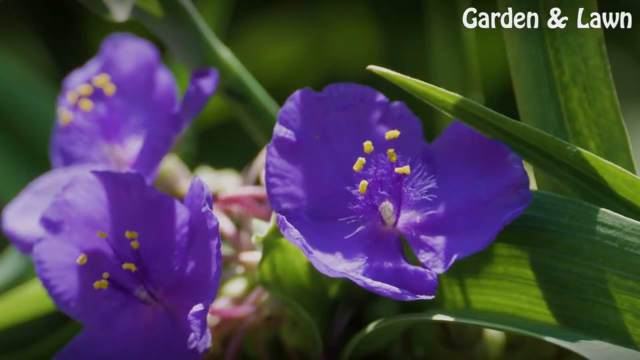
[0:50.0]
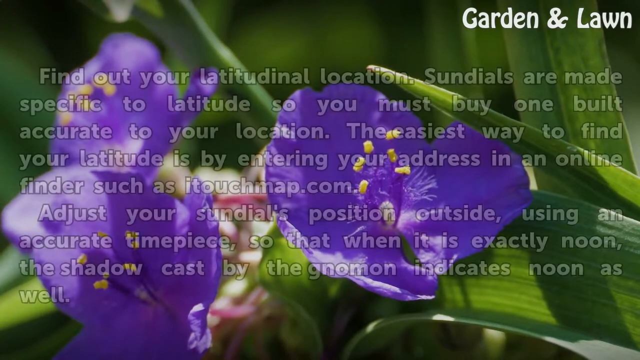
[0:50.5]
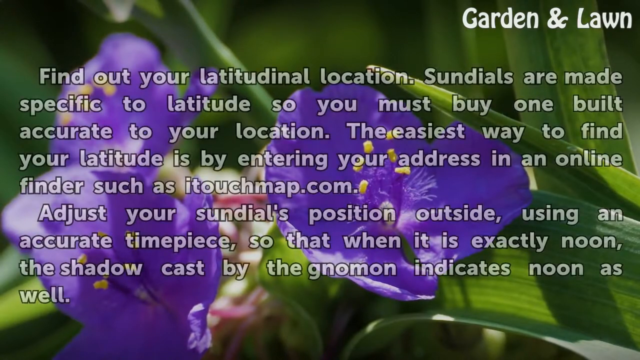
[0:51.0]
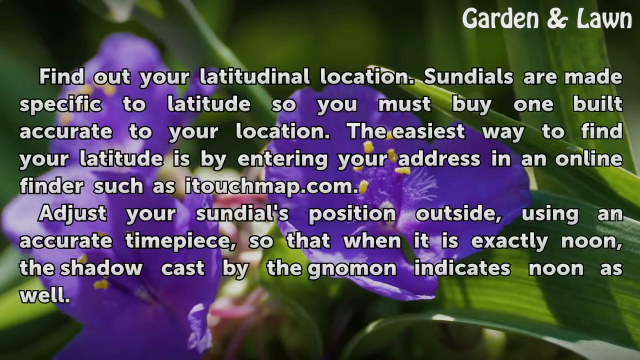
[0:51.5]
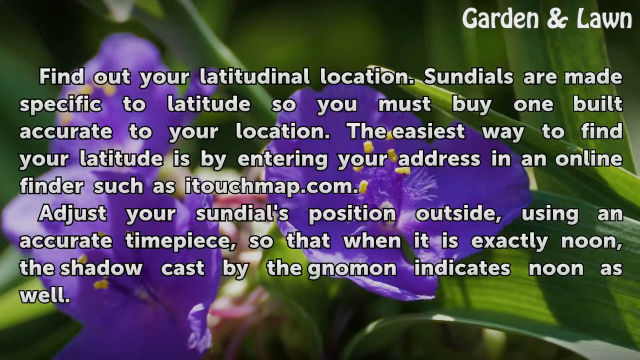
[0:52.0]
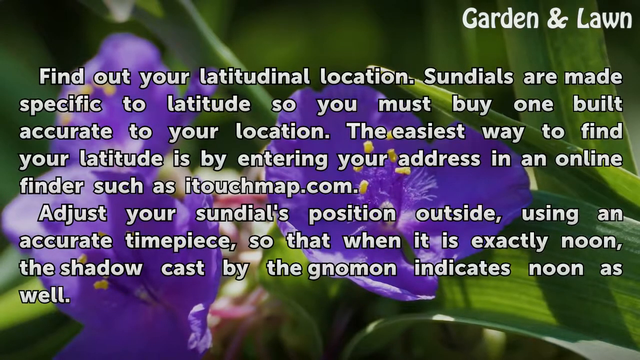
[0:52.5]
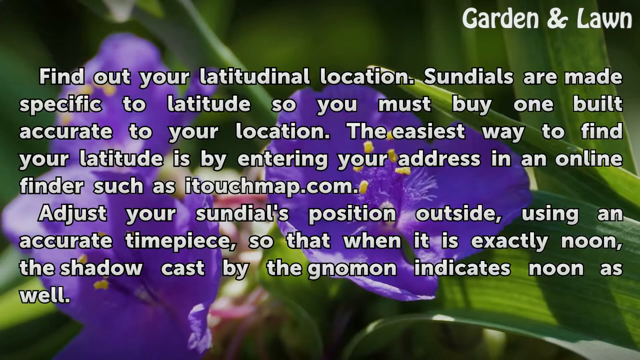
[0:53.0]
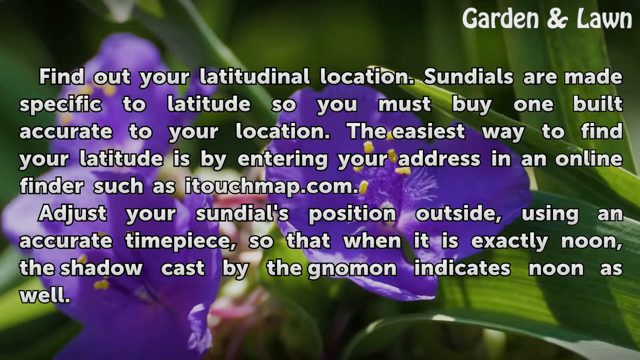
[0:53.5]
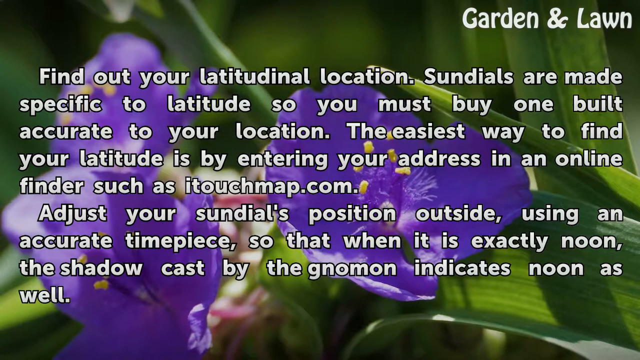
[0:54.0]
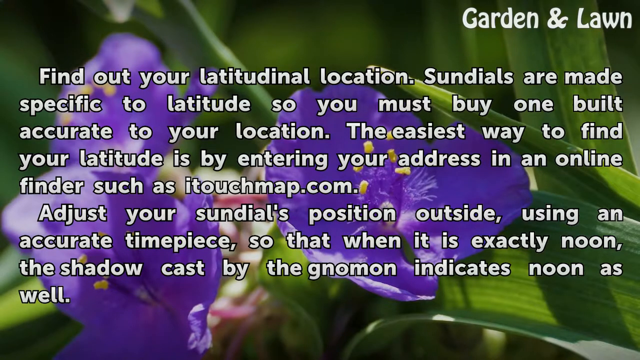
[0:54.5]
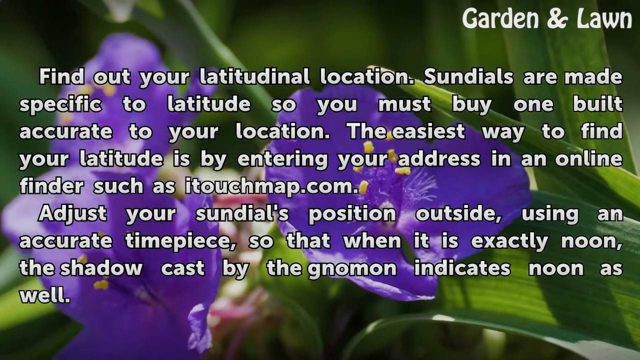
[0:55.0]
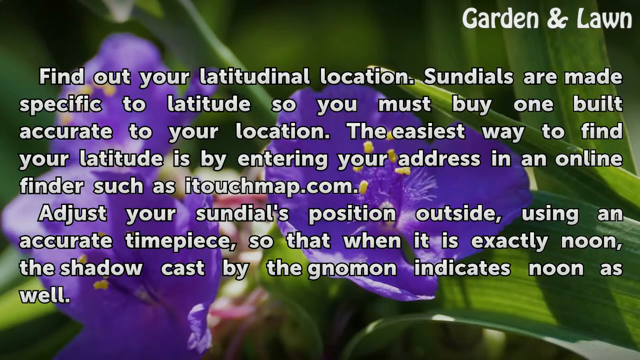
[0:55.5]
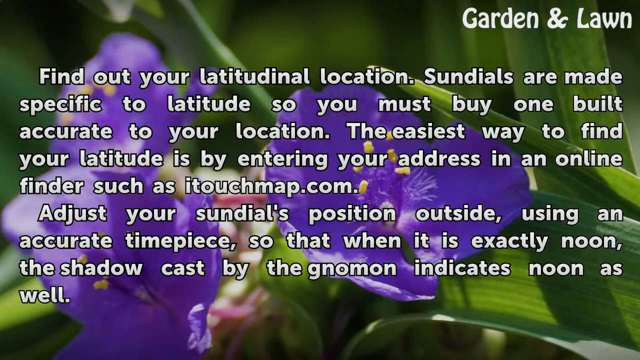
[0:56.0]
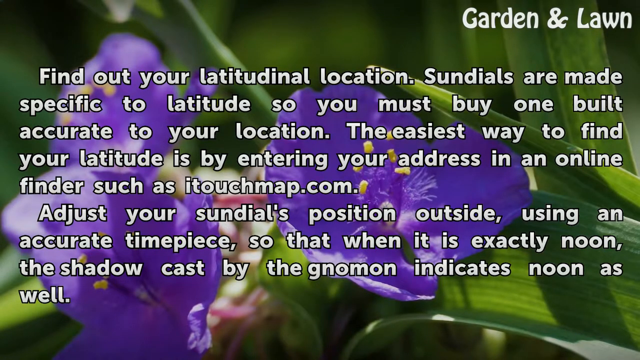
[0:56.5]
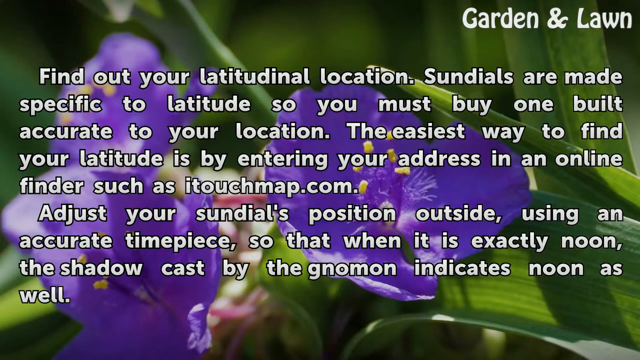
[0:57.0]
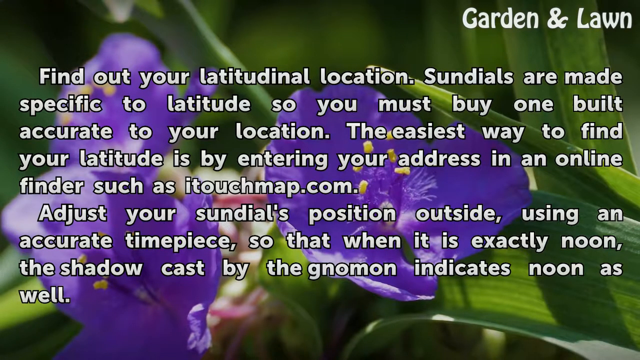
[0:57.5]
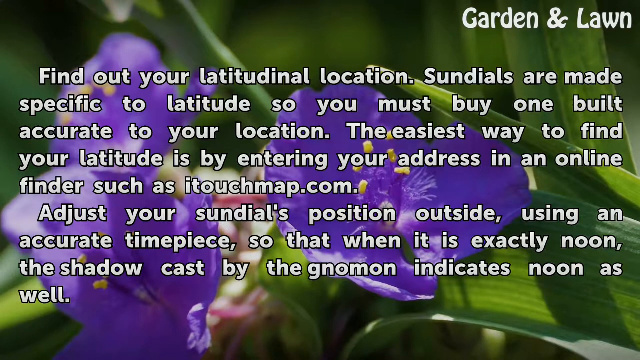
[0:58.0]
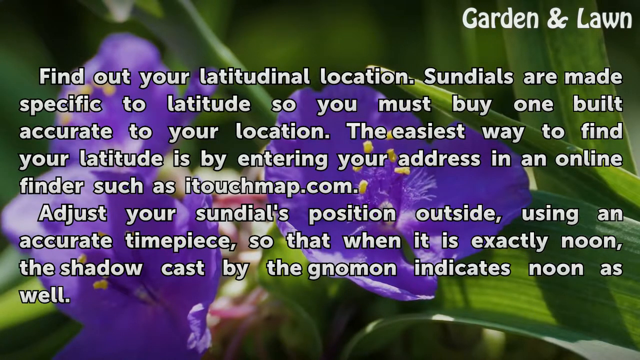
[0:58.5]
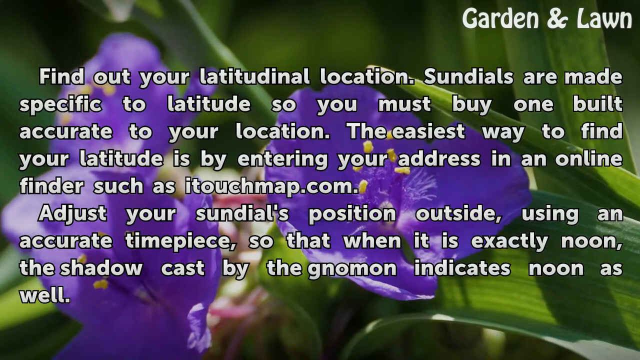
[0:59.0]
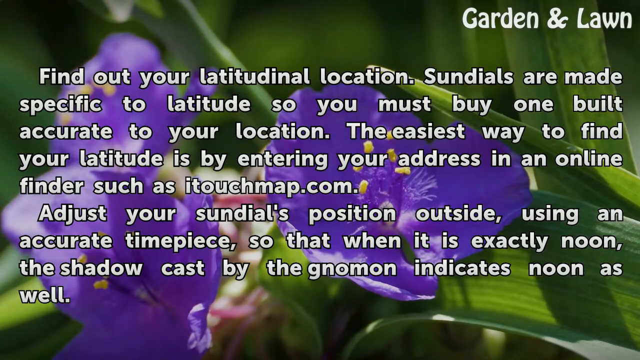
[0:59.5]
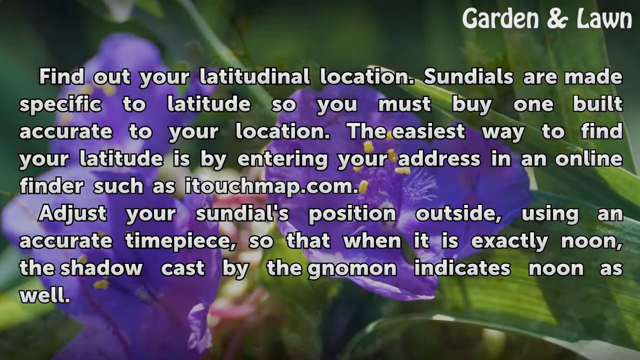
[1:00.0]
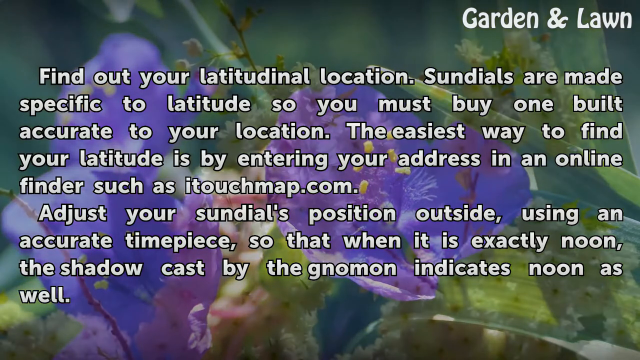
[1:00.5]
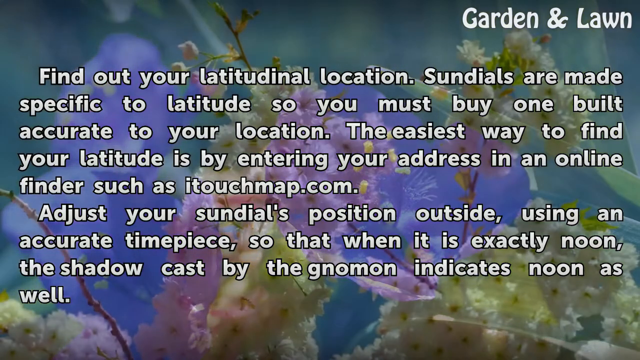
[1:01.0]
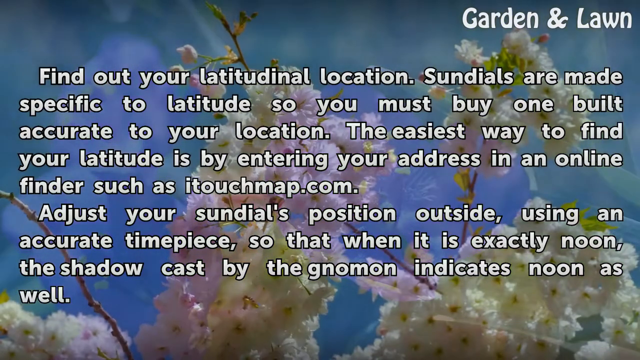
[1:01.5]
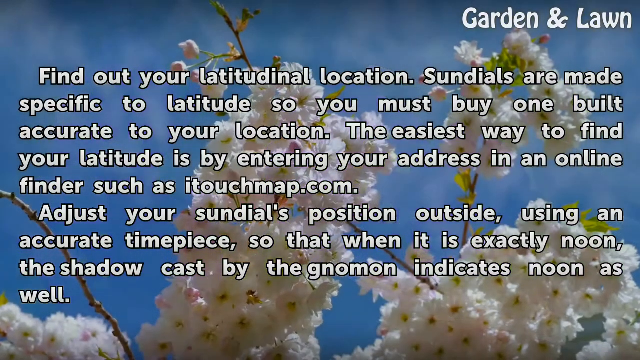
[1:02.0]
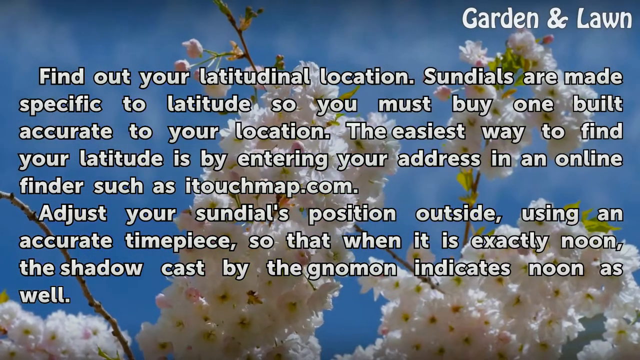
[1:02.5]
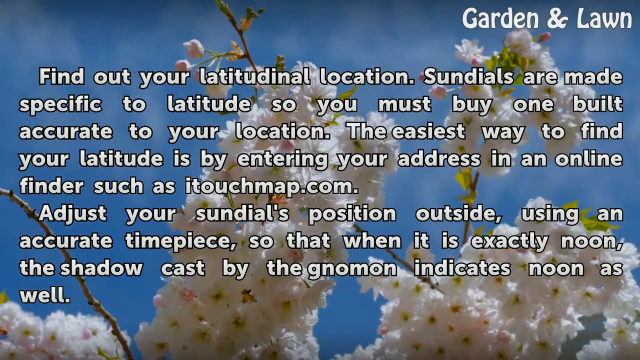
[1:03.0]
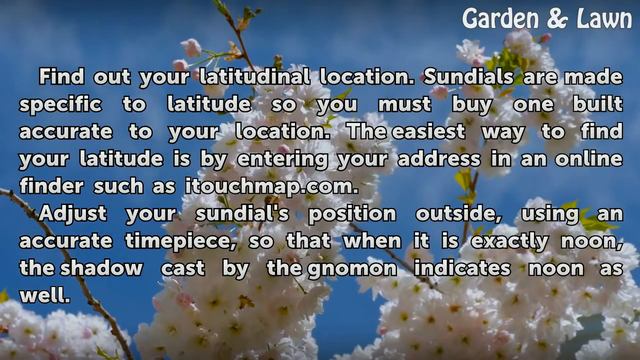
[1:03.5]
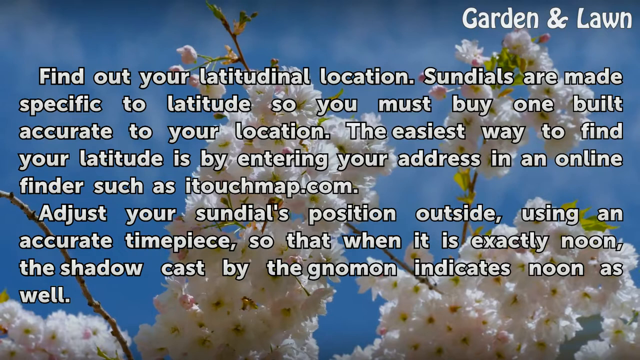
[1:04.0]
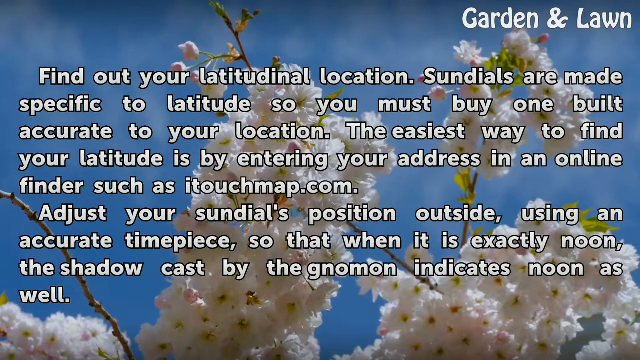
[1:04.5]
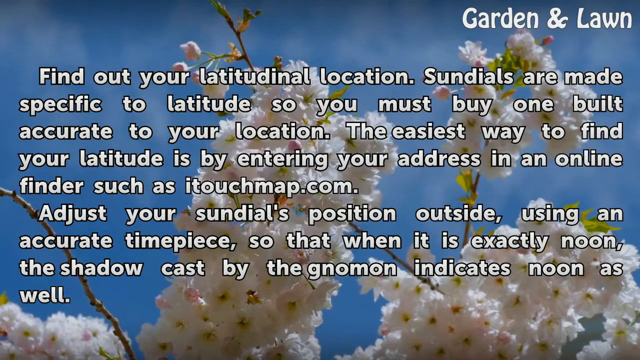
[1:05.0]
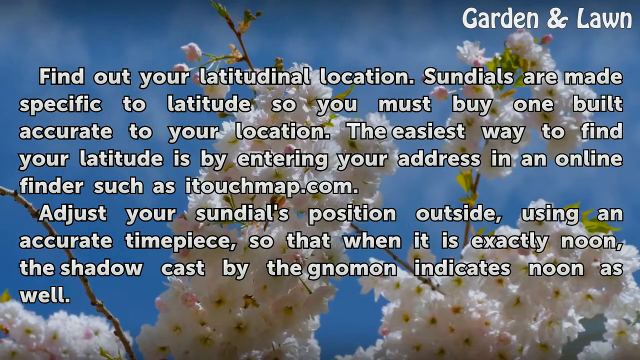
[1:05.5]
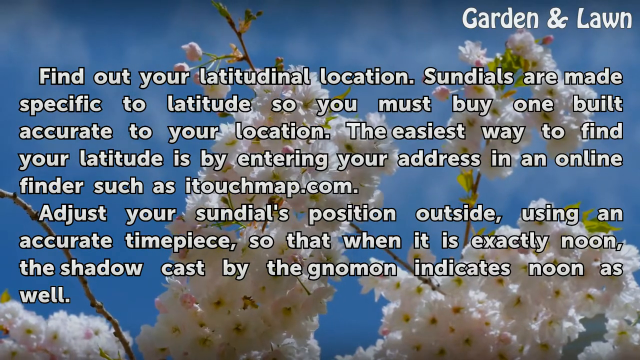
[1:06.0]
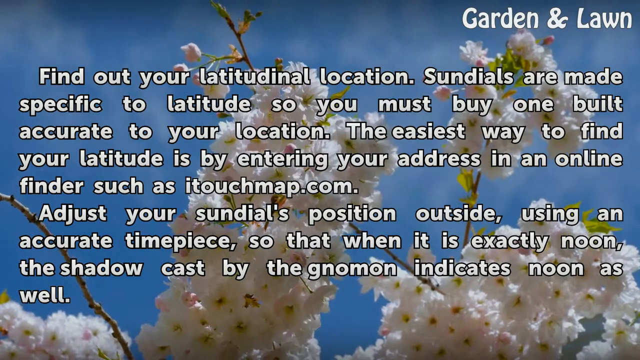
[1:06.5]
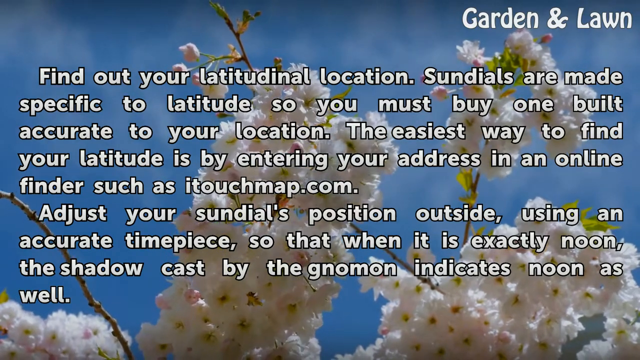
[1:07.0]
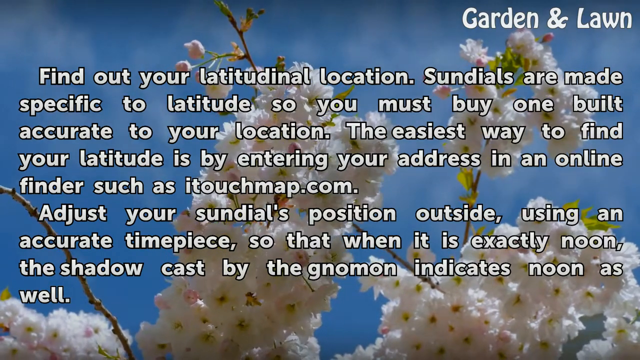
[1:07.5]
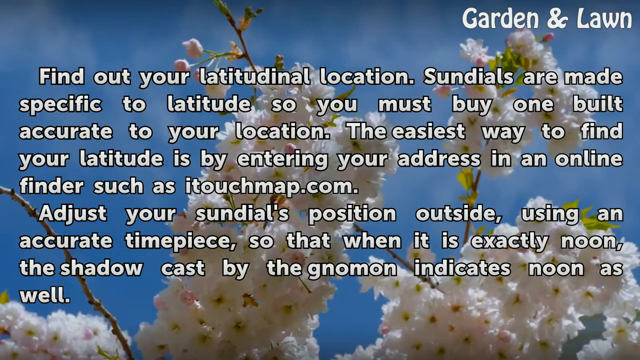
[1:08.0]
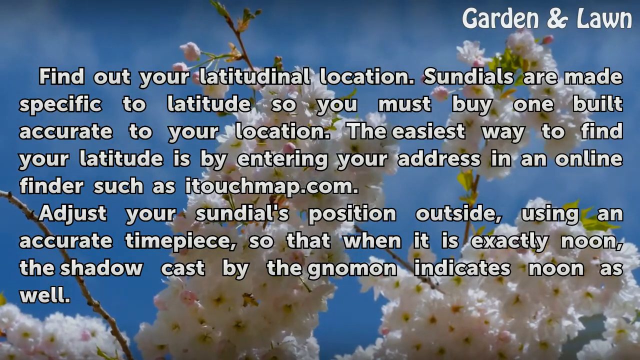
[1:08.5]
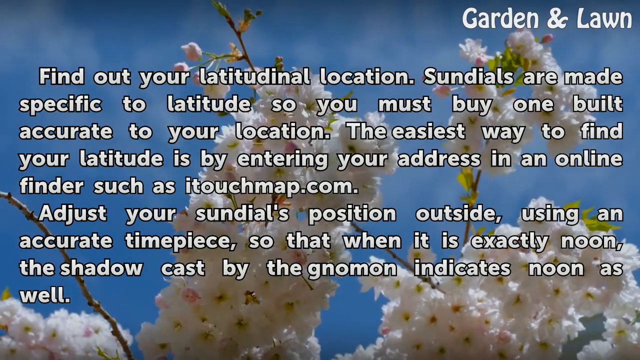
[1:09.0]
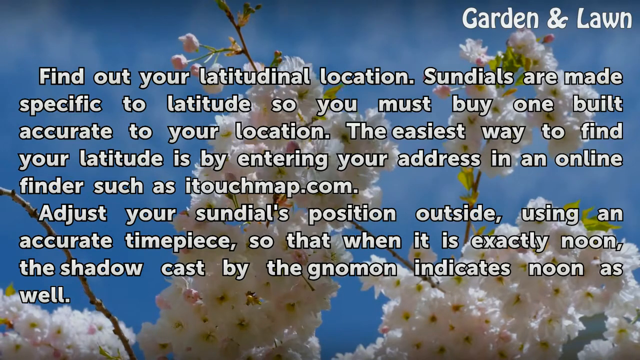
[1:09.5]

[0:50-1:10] Instructions refer to finding one's latitude by entering an address in an online finder "such as the itouchmap.com" and to adjusting the sundial's position outside using an accurate timepiece. Sundials are described as being built specific to a location's latitude.